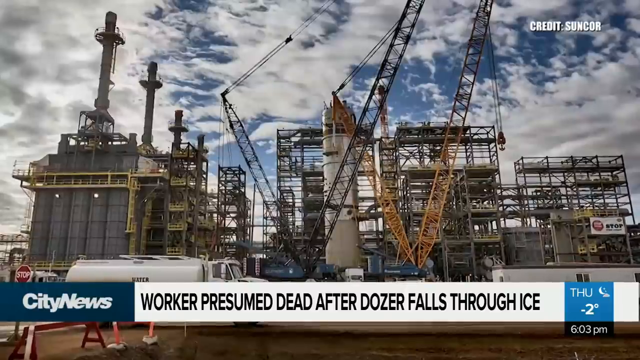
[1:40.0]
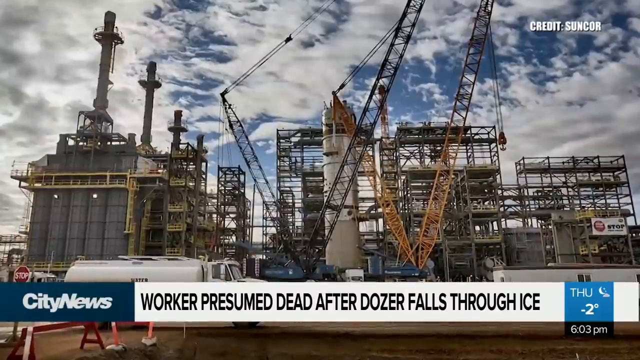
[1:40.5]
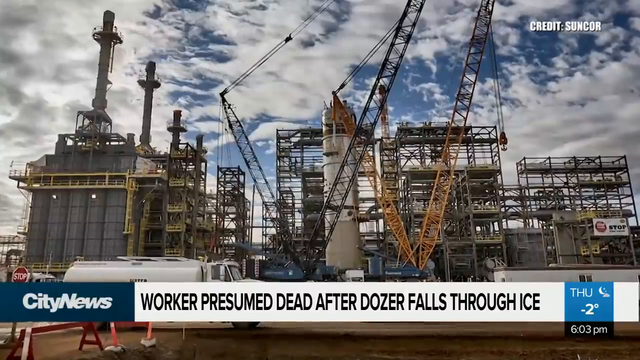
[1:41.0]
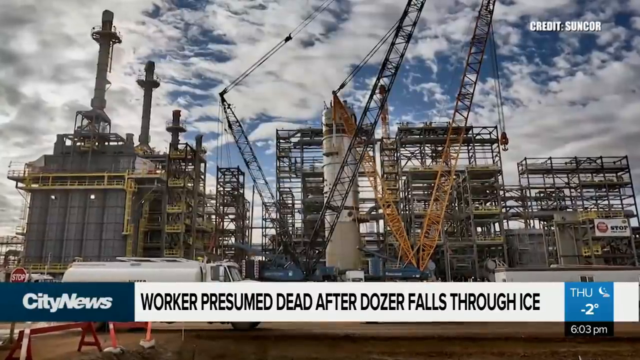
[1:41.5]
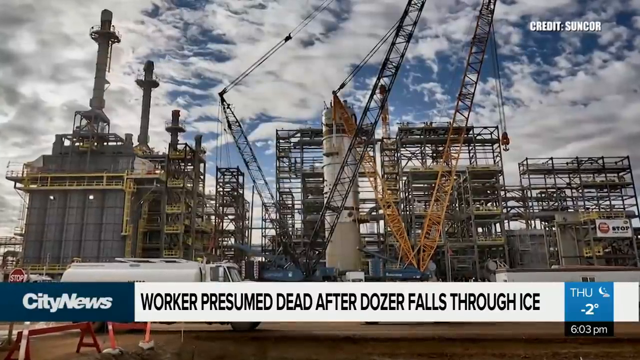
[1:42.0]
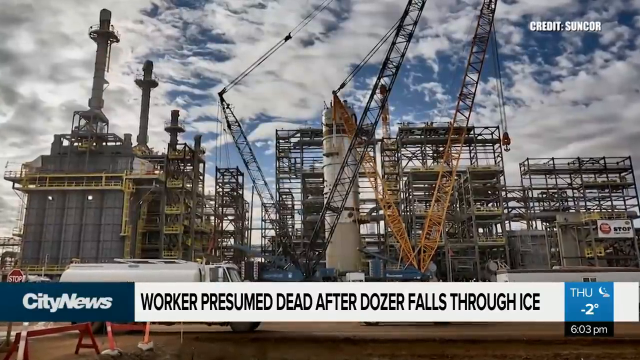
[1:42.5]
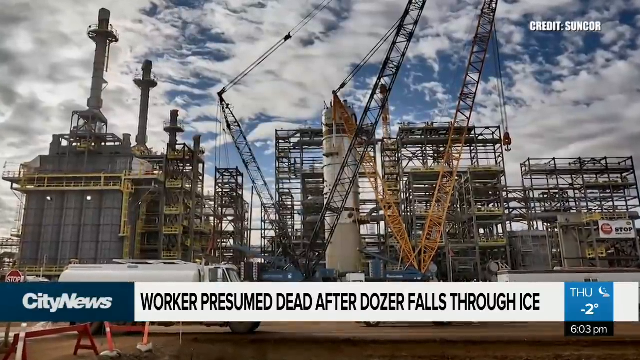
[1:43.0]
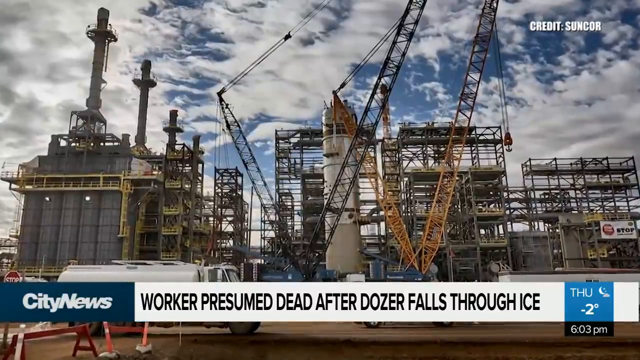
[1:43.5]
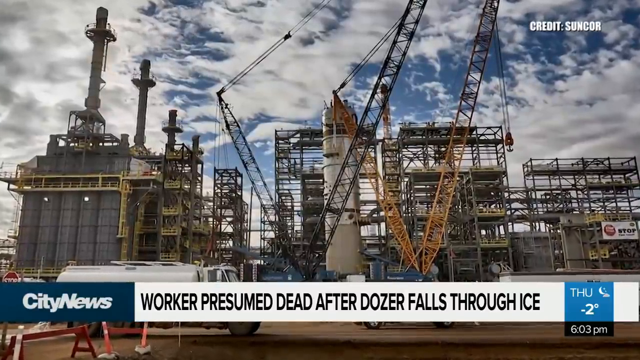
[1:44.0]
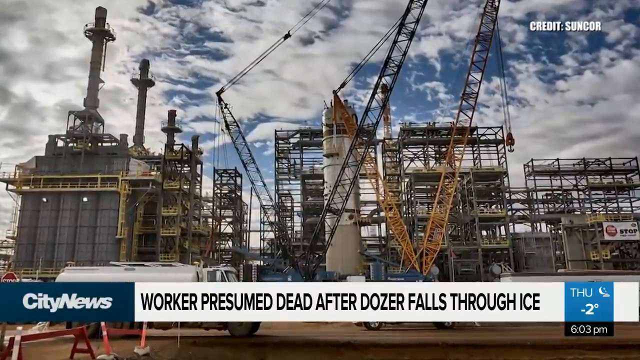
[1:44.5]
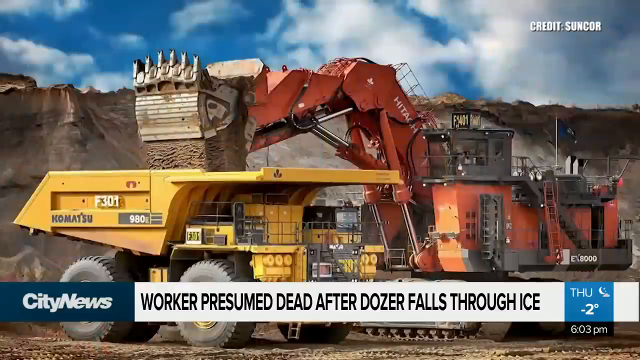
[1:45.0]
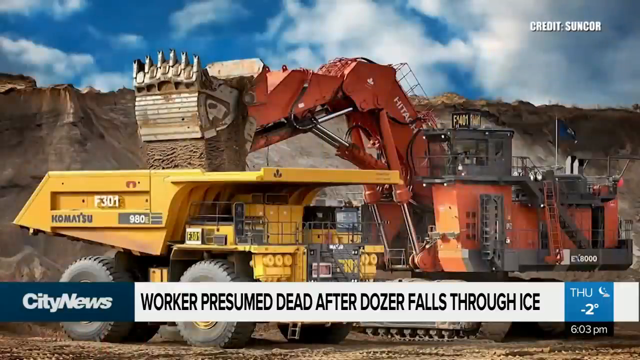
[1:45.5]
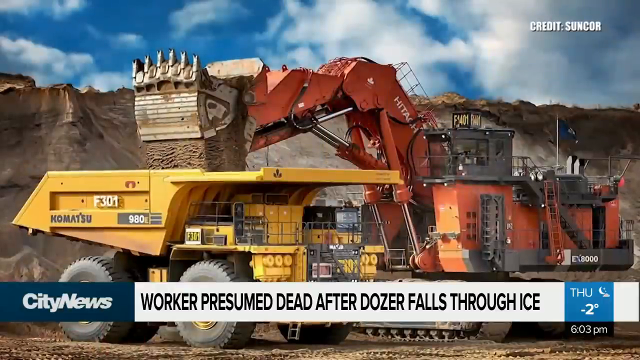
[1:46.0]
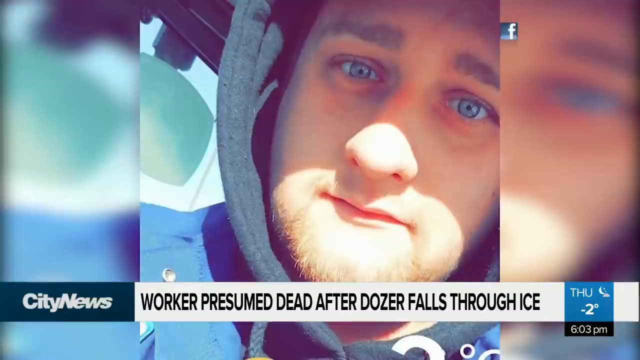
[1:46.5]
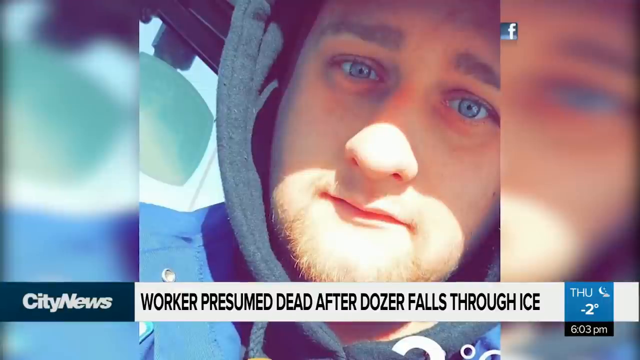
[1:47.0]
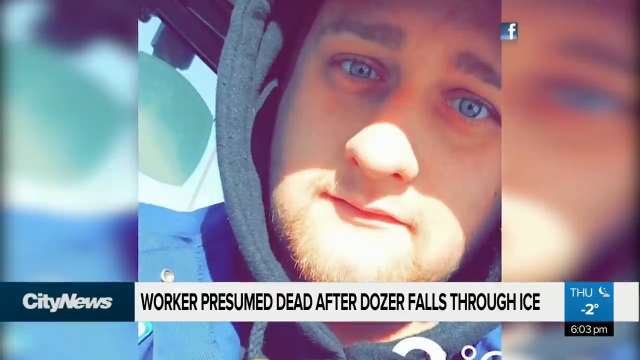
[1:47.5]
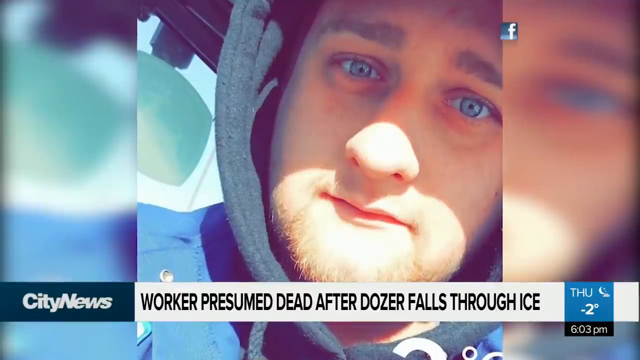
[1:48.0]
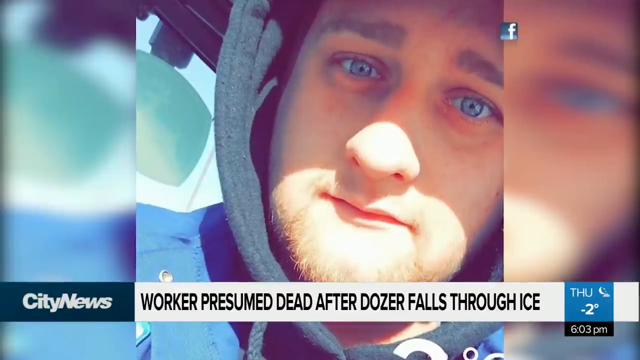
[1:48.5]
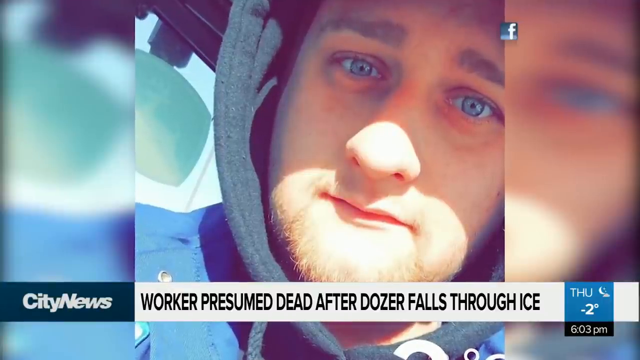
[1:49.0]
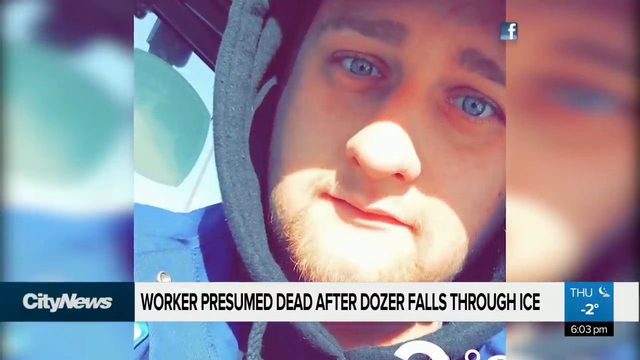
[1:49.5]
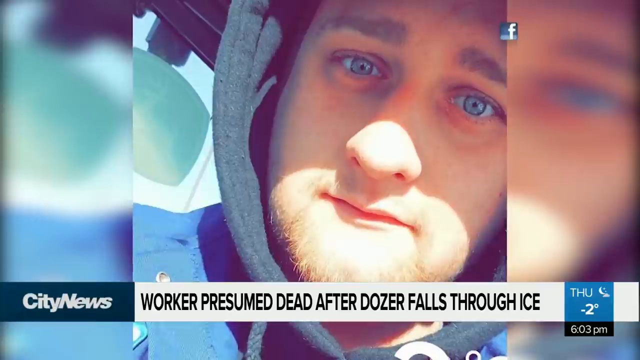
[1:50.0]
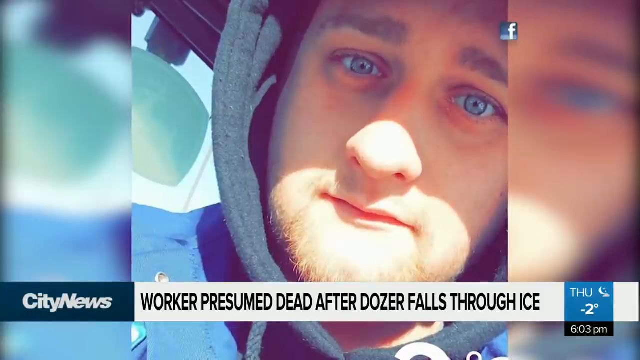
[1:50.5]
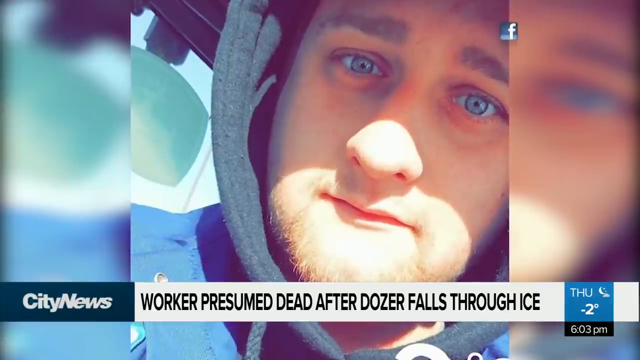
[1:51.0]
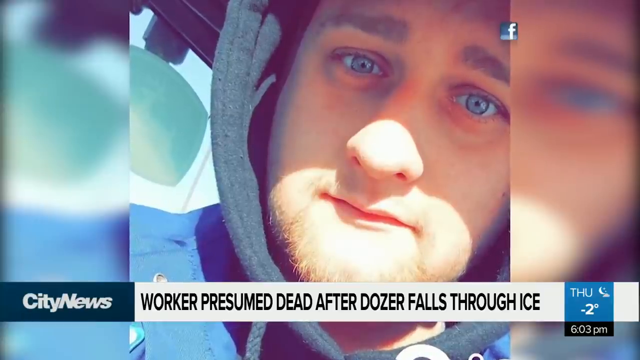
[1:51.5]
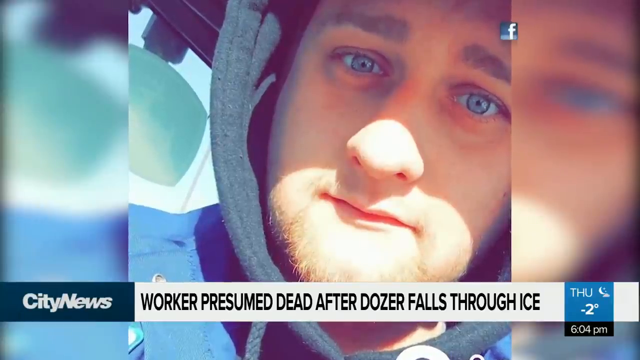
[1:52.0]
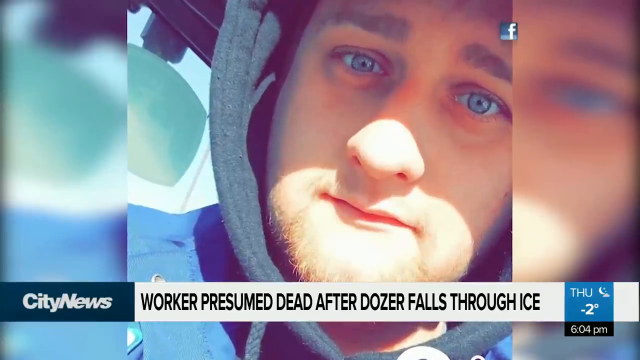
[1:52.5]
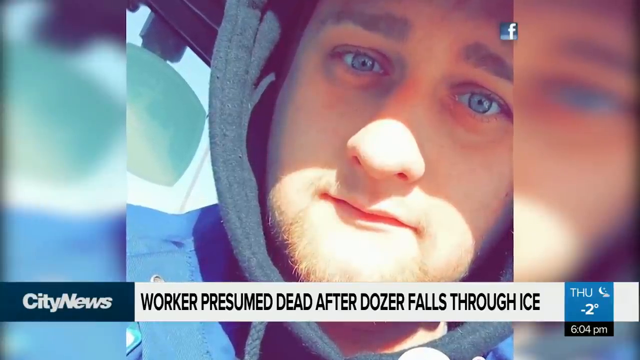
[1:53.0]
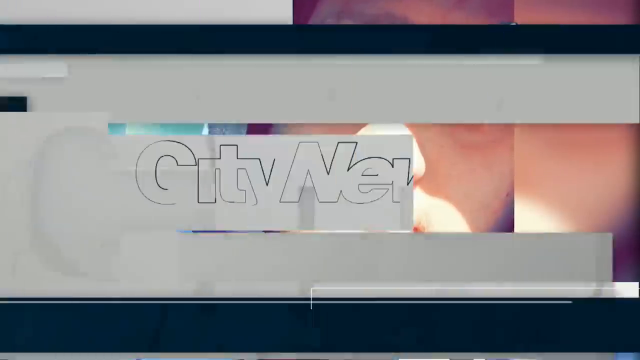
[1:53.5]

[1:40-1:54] Footage shows the Suncor facility, which looks like some sort of quarry, with a lot of very large machinery on a clear blue day. Underneath is the headline bar with "city news" in blue with white letters and a white box with black letters reading "worker presumed dead after dozer falls through ice," and a graphic shows that it is Thursday, negative two degrees and 6:03 p.m. local time. This is replaced by what looks to be an industrial-size dump truck, with sand being poured into it. That is replaced by a close-up Facebook picture of a worker in a black hoodie, his eyes very blue. Finally, a white background appears with "city news" written over it in blue.